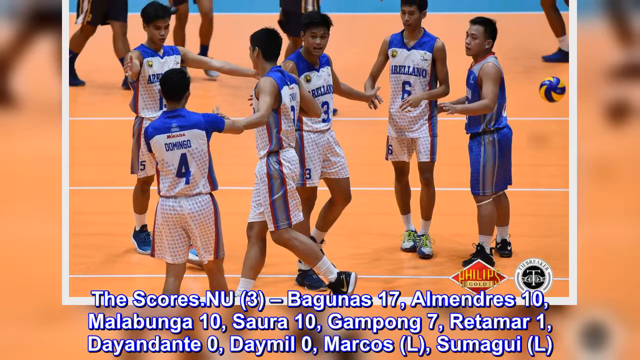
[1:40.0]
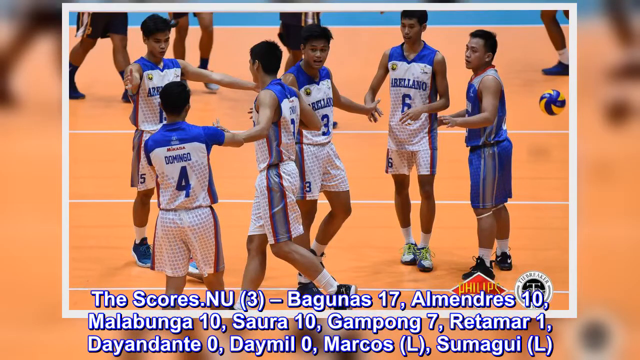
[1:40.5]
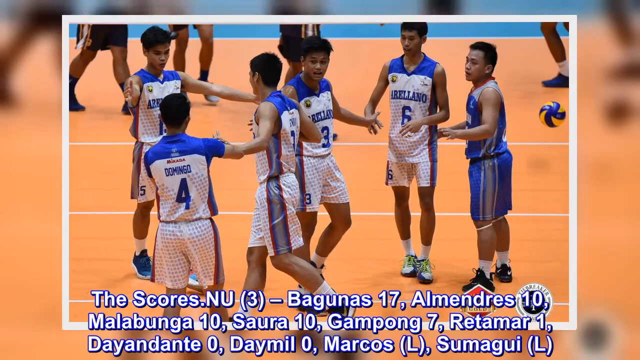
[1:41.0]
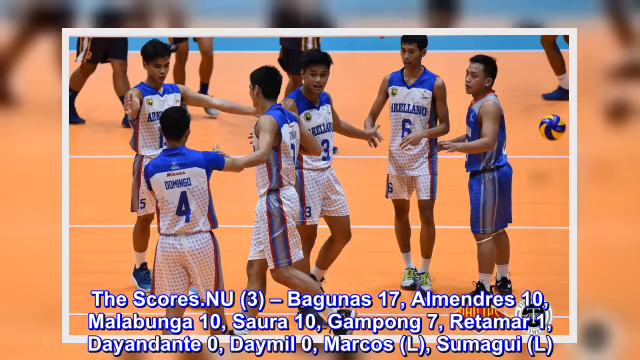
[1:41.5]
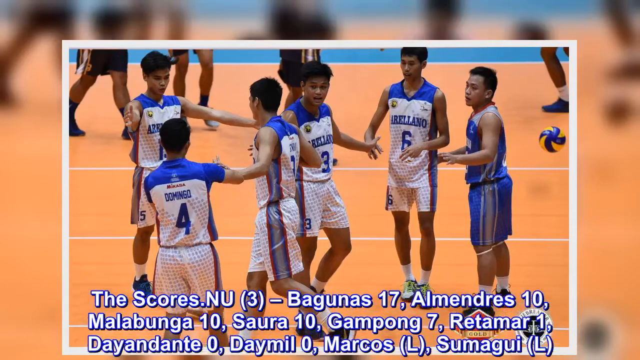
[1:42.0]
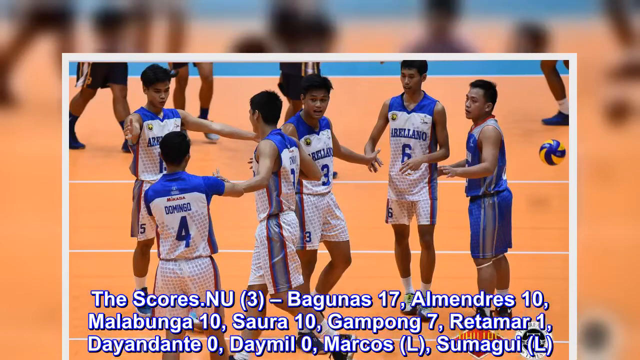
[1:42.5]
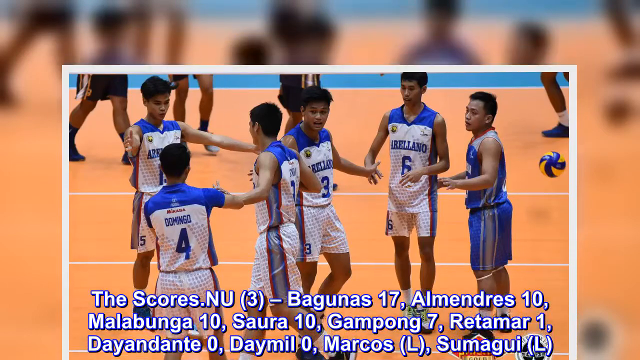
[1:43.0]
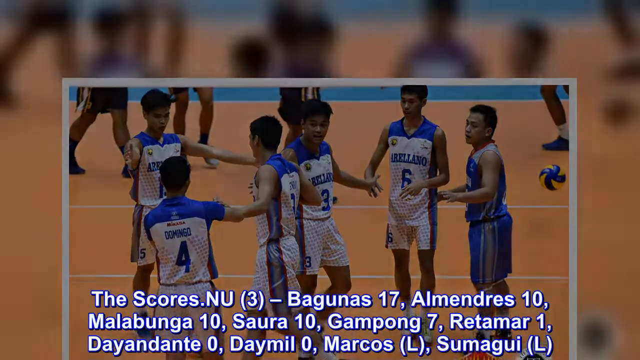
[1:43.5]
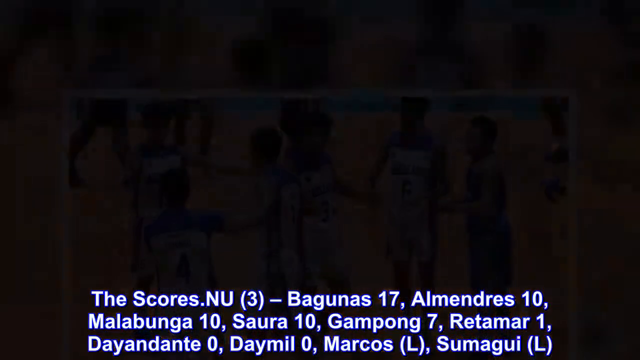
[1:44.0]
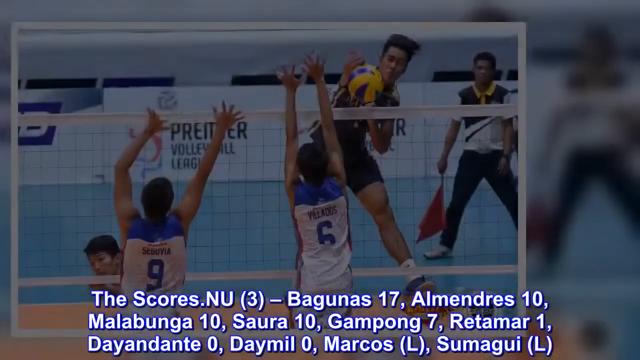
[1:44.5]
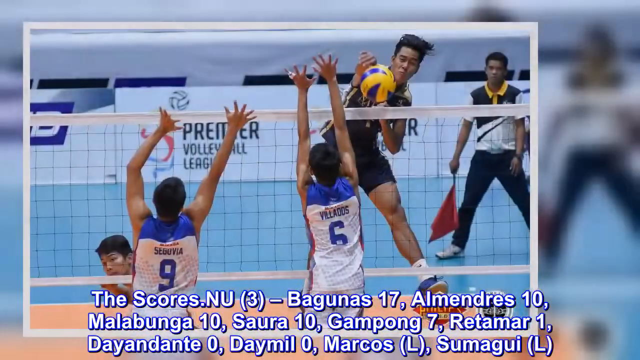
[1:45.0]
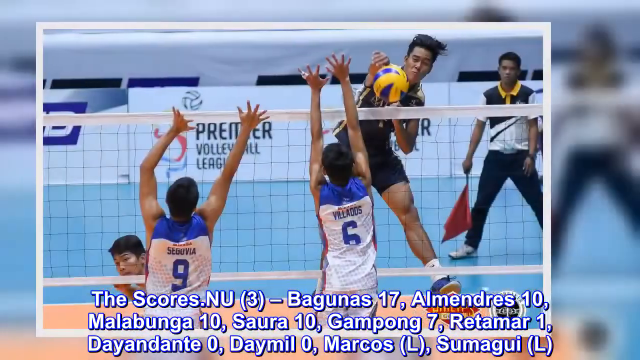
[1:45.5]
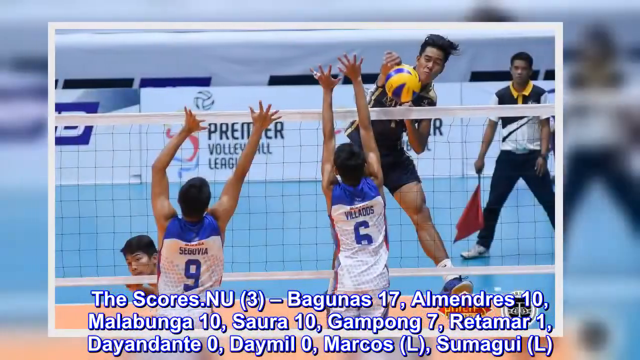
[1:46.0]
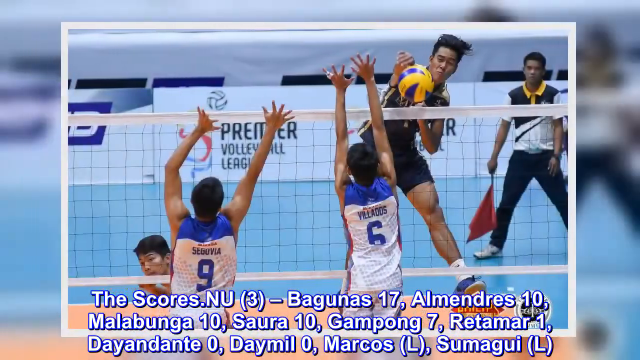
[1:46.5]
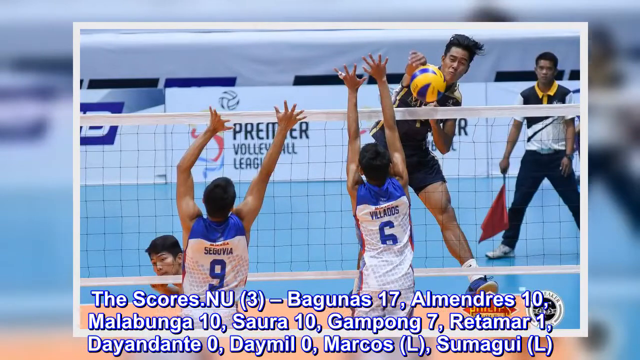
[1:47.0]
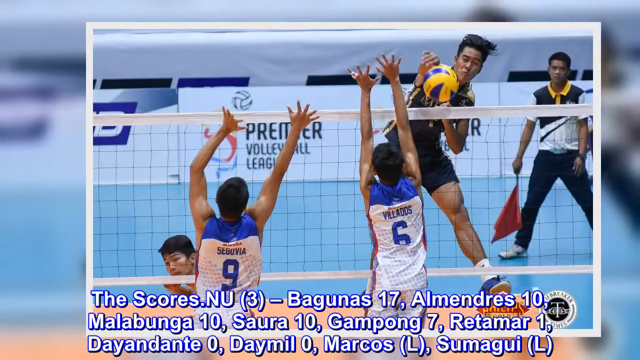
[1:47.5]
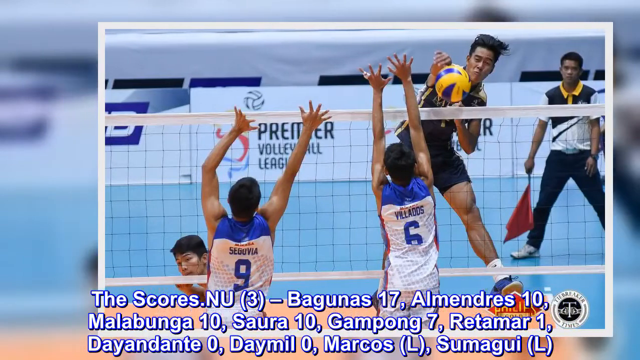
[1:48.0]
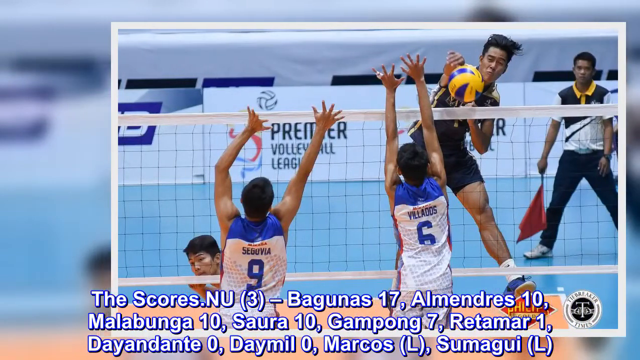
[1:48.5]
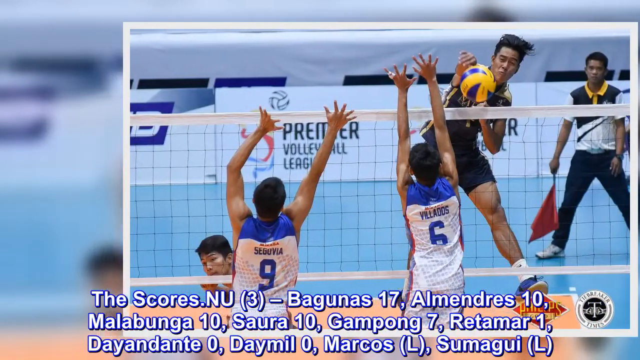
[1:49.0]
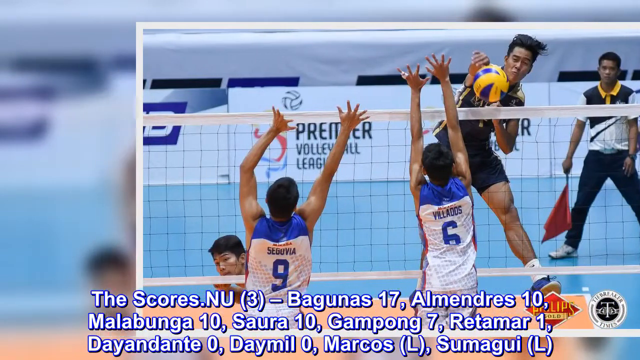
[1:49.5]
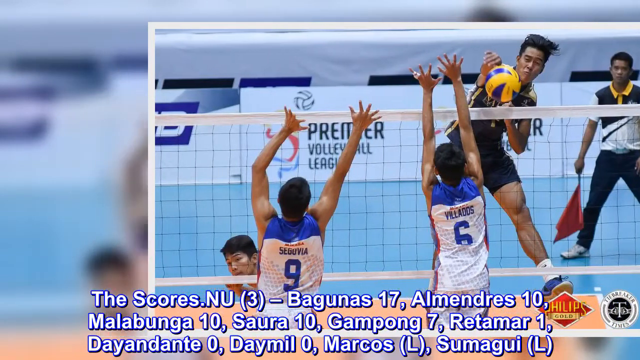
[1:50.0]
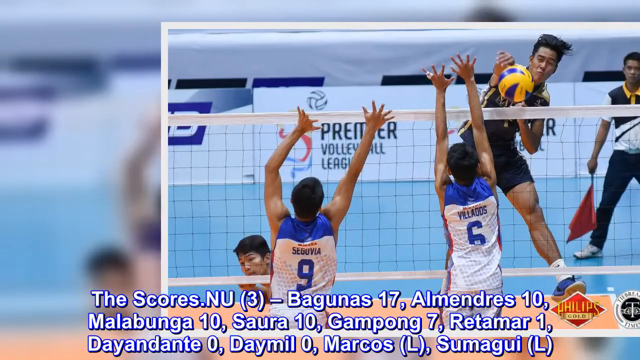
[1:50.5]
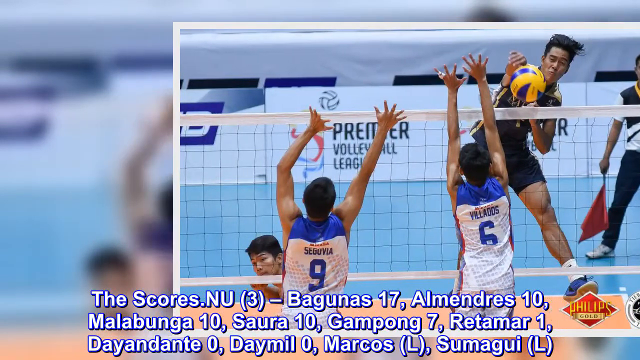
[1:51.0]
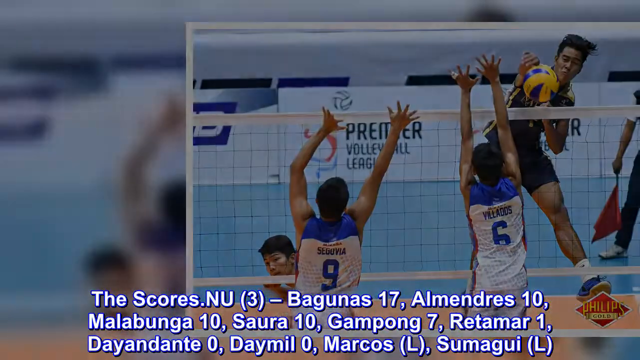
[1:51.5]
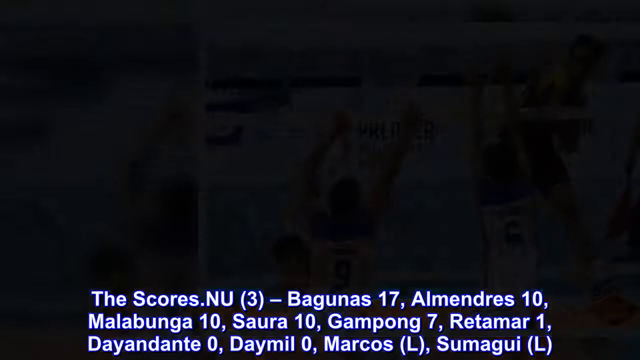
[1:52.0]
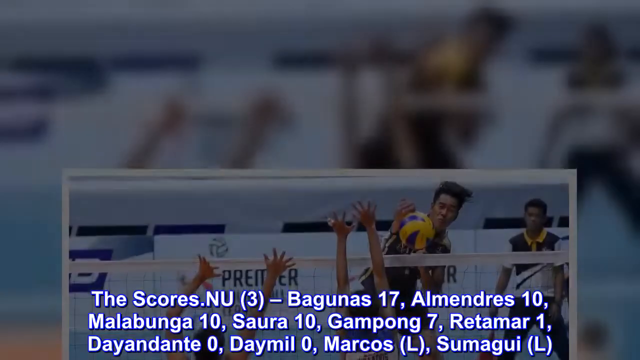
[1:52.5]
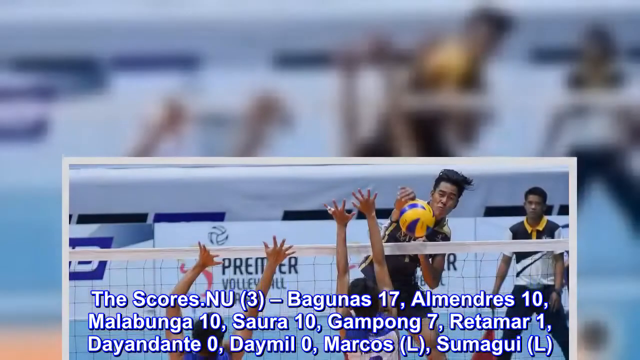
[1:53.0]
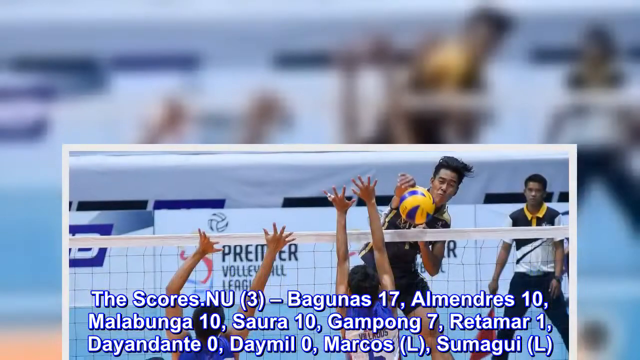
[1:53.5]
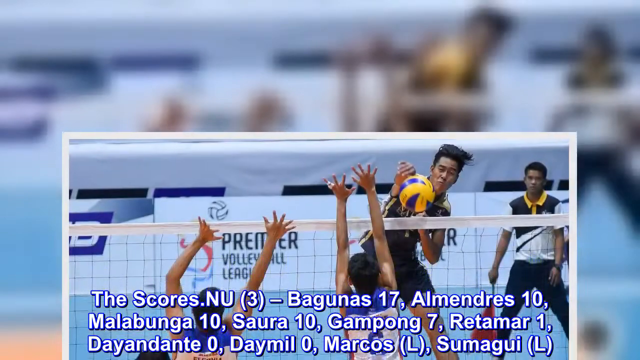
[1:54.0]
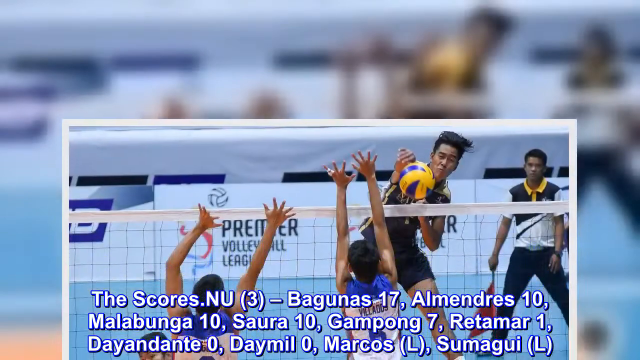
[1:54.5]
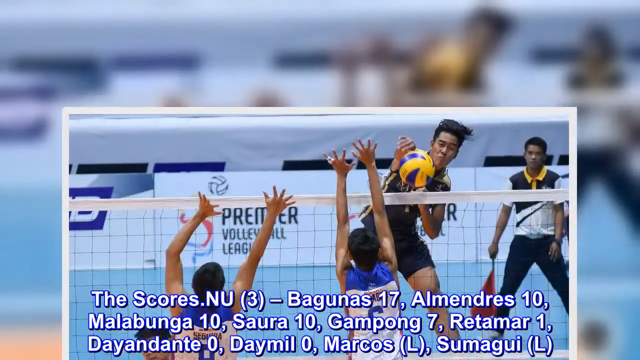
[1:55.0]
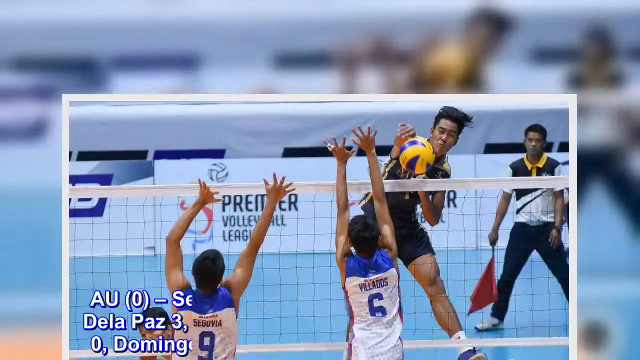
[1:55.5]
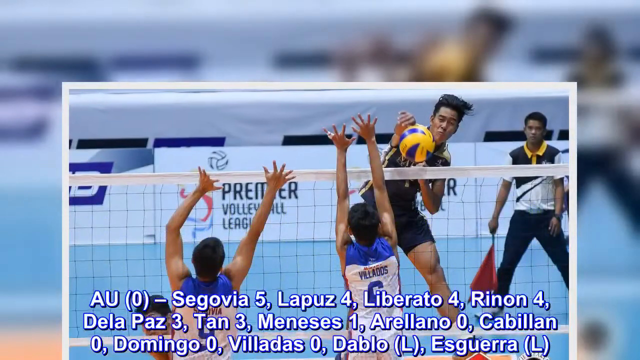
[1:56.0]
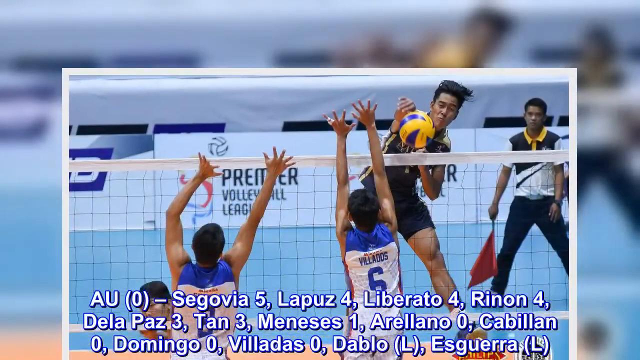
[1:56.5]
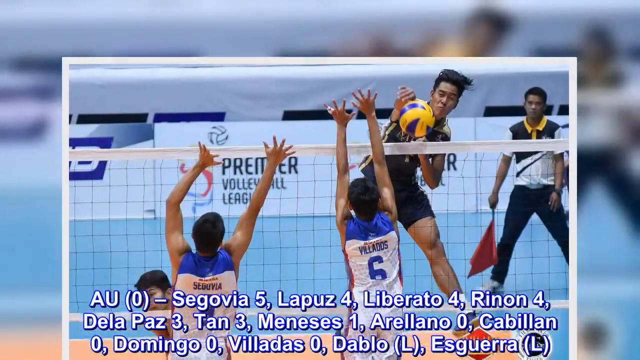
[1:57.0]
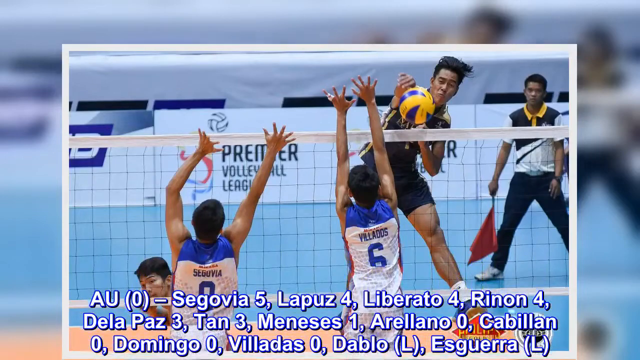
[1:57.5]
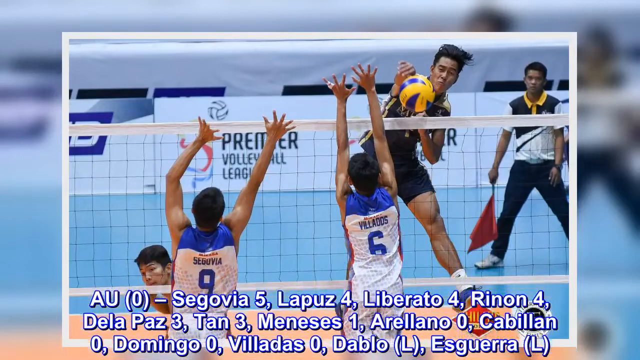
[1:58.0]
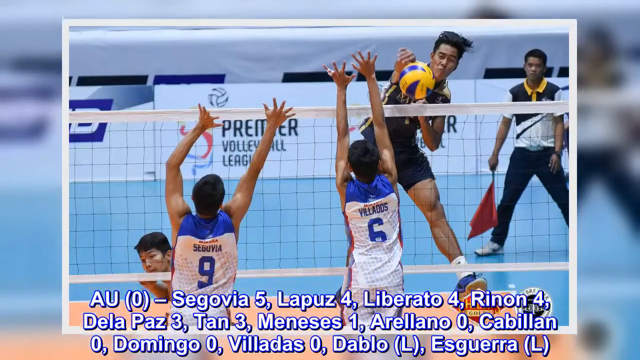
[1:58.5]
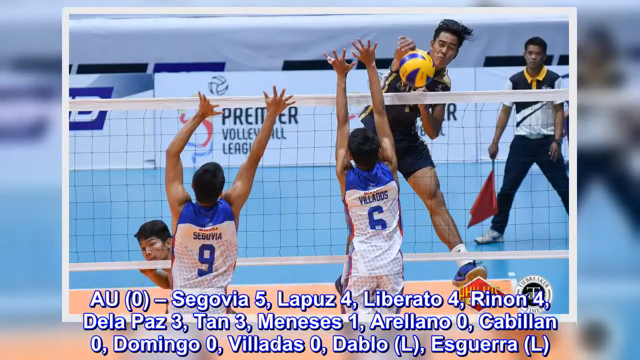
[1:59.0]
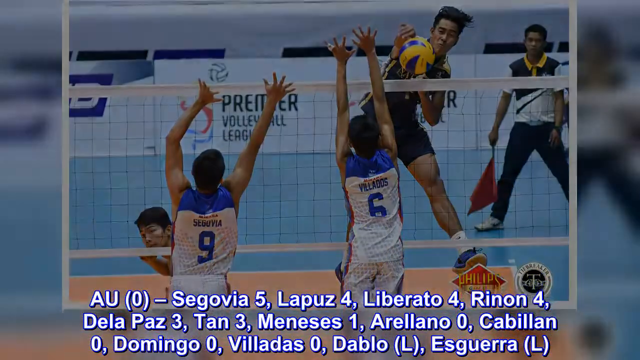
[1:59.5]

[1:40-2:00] The defending champion National University Bulldogs, in gold and black uniforms, and the Arleno University Chiefs, in white and blue uniforms, exchange congratulatory handshakes at the end of the match. Text reads: "The scores for NU, Begunis 17, Almedrez 10, Malagunda 10, Sara 10, Gampong 7, Retemar 1."